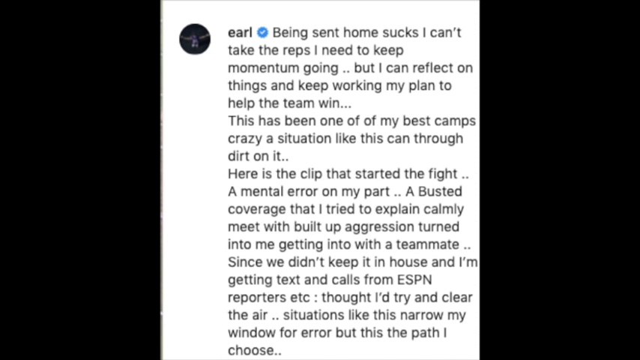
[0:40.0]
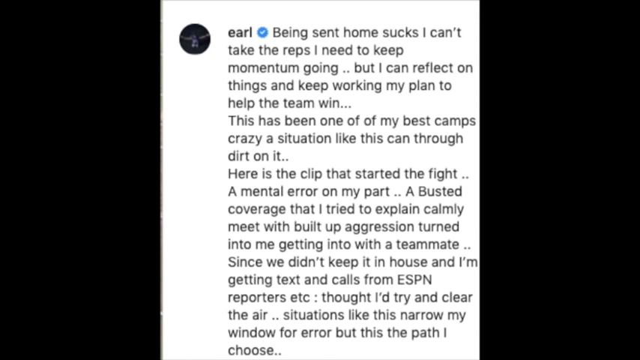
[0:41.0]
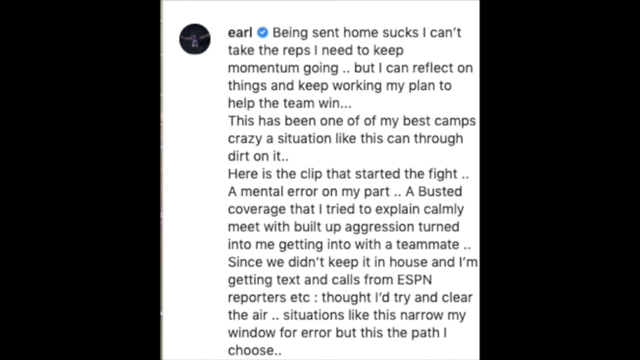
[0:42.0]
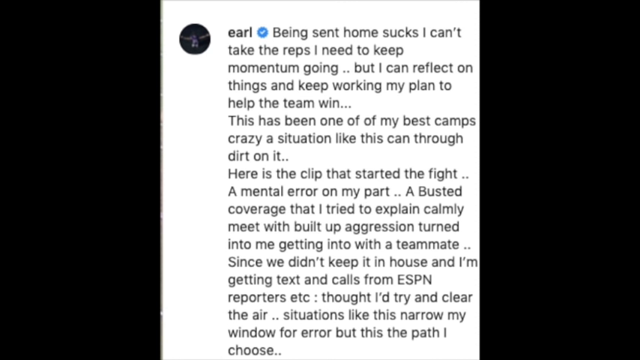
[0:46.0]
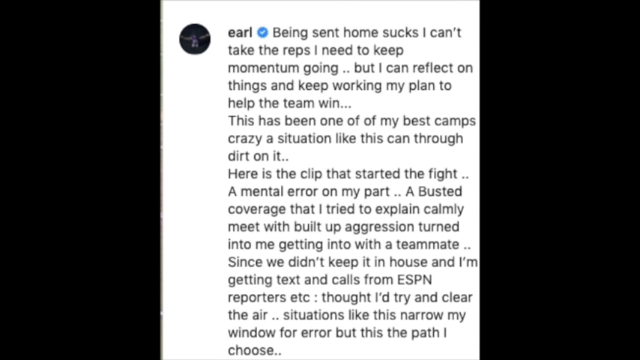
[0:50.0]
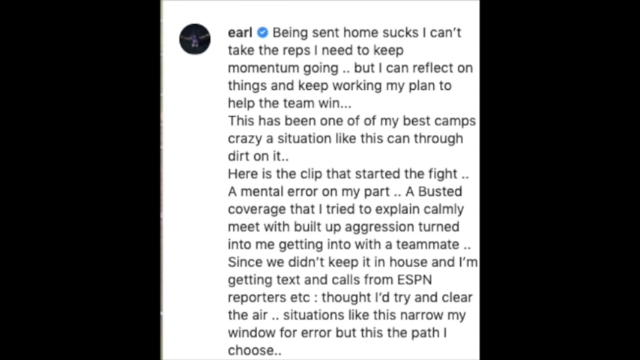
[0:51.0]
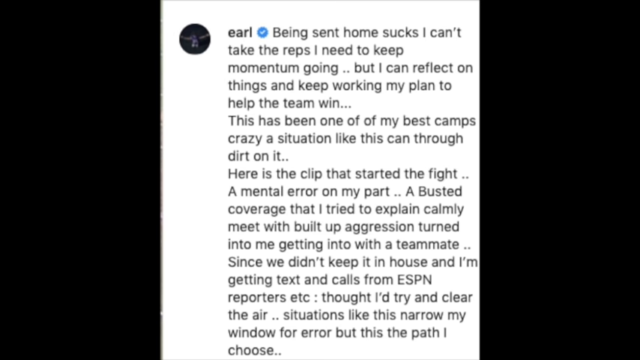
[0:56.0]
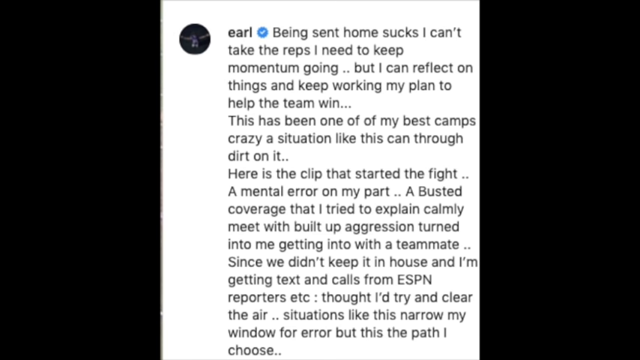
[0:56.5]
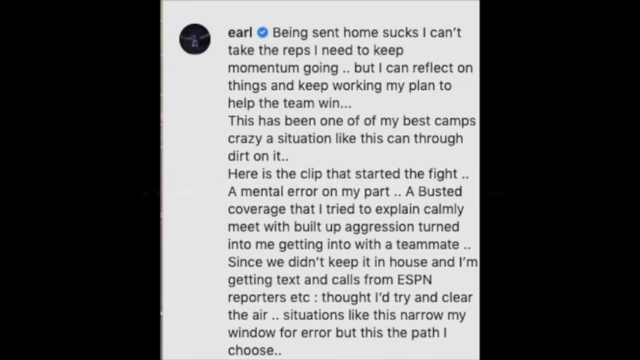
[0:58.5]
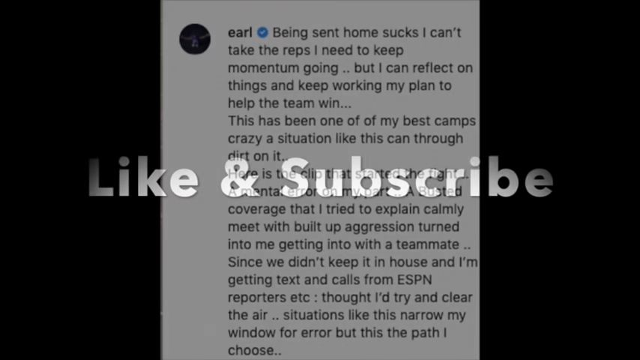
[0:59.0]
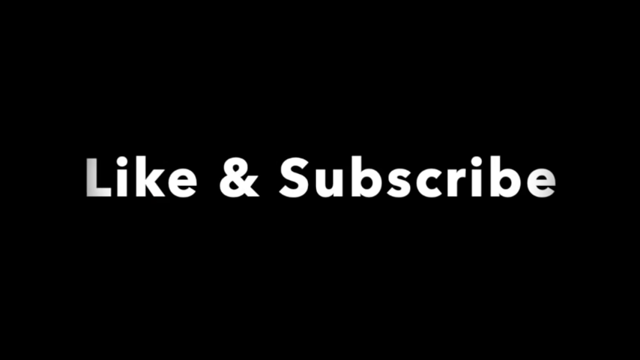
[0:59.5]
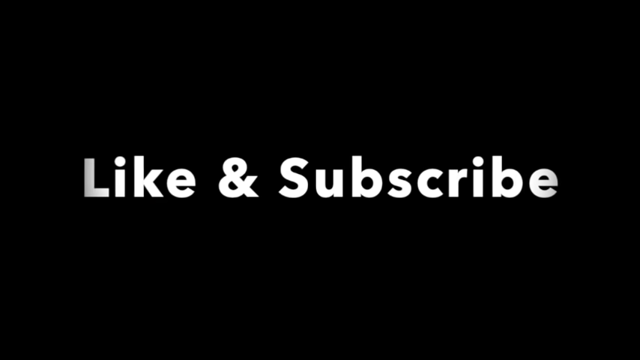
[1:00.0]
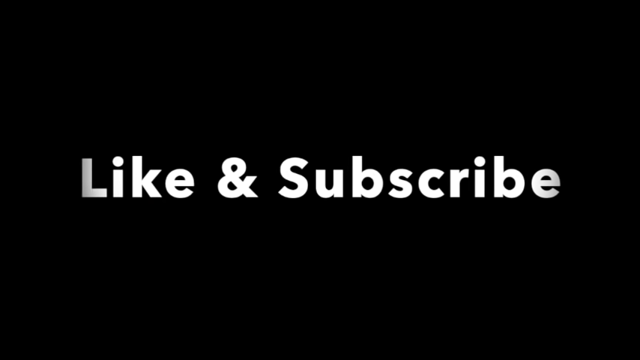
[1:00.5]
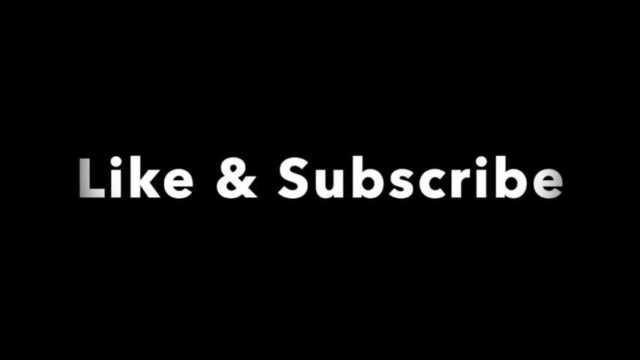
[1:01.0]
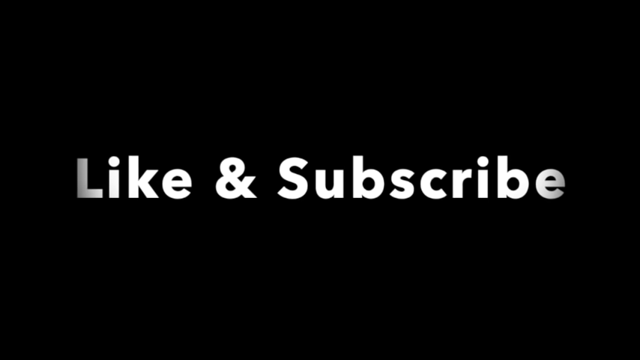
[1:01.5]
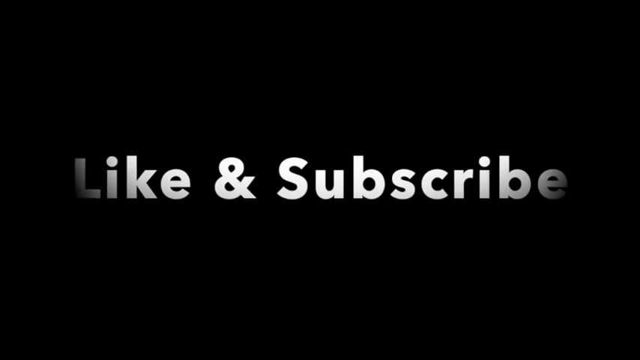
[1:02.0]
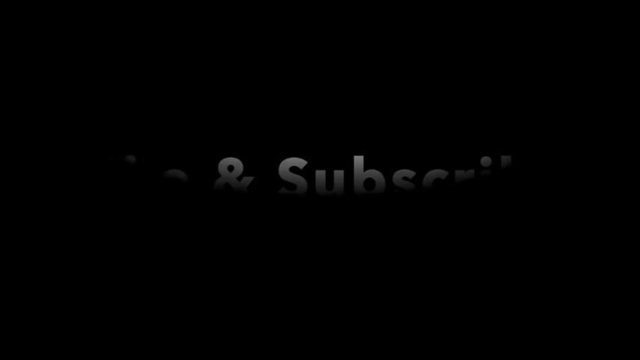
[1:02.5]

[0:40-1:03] The video, a little wider than it is tall, has letterboxing on the left and right occupying maybe about 60% of the width. In the center, against an all-white background, is a phone view of a Twitter post. It appears to be from Earl, as the name at the top, just right of the profile picture, shows, along with a blue checkmark. The post reads: "Being sent home sucks I can't take the reps I need to keep momentum going, but I can reflect on things and keep working my plan to help the team win. This has been one of my best camps crazy a situation like this can throw dirt on it. Here is the clip that started the fight a mental error on my part, a busted coverage that I tried to explain calmly meets with build up aggression turned into me getting into with a teammate. Since we didn't keep it in house. I'm getting texts and calls from ESPN reporters etc thought I'd try to clear the air", and the text ends with a couple of dots. The post stays on screen for the rest of the shot, then switches to a black screen with "like and subscribe" in white text in the center.